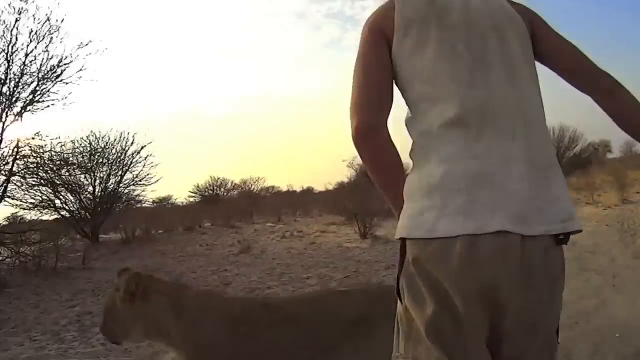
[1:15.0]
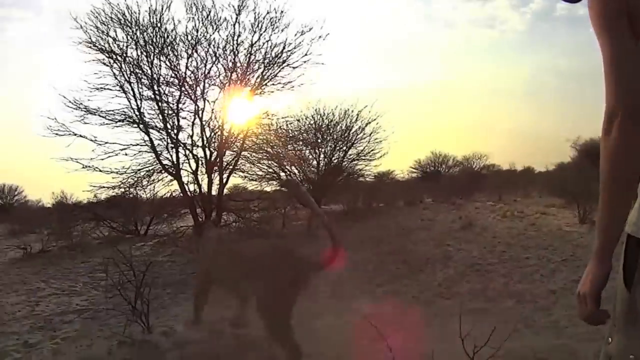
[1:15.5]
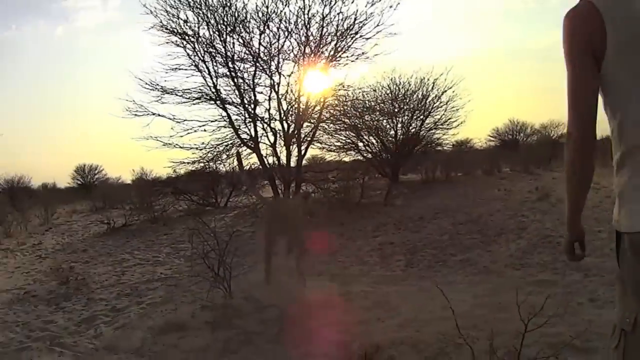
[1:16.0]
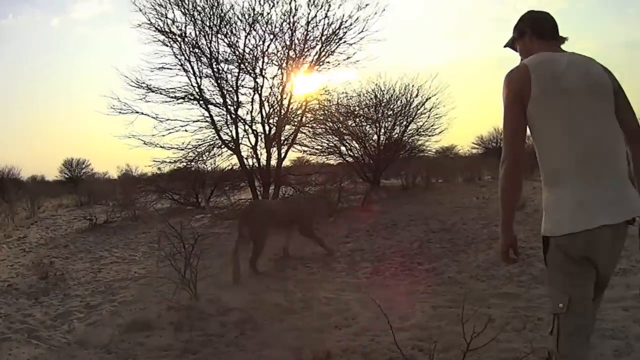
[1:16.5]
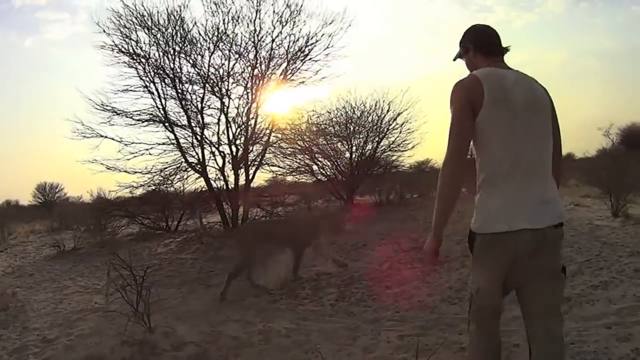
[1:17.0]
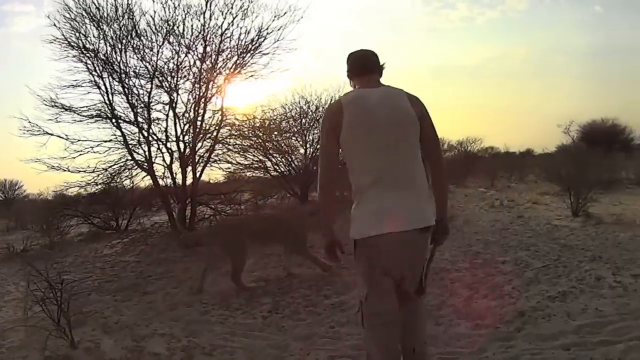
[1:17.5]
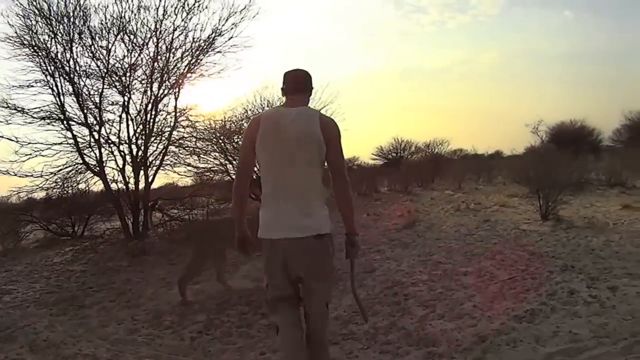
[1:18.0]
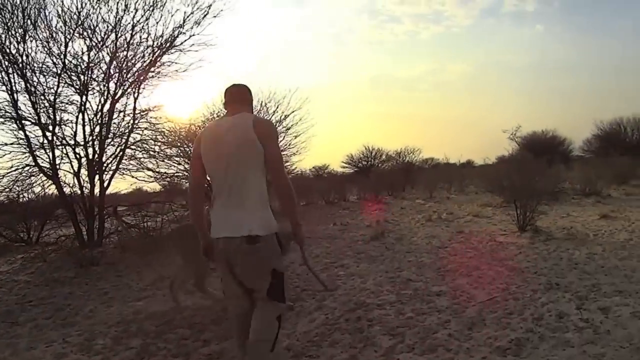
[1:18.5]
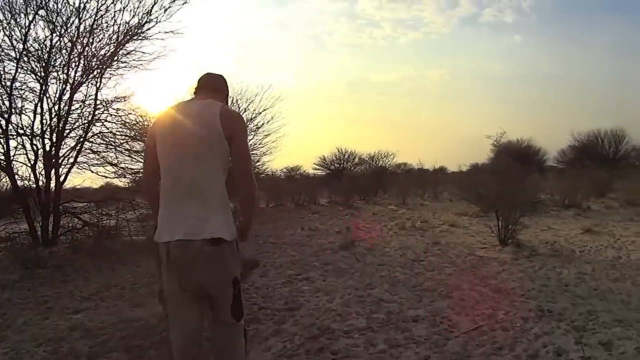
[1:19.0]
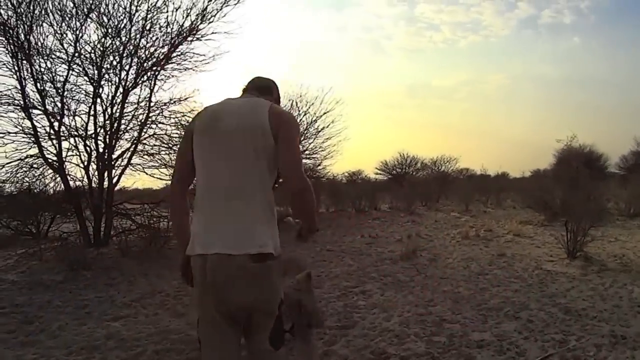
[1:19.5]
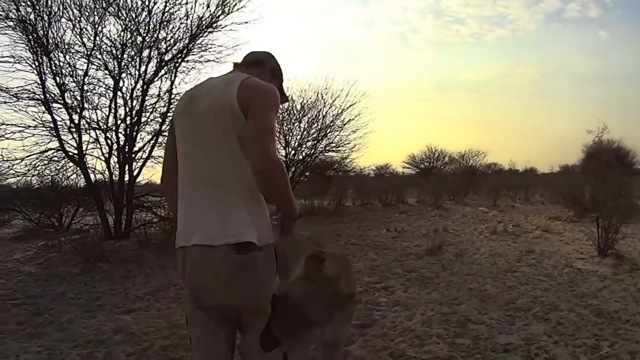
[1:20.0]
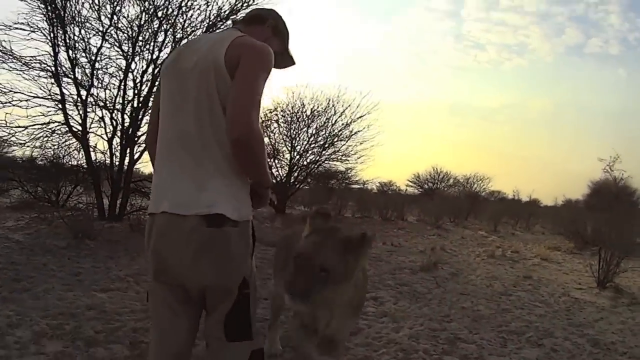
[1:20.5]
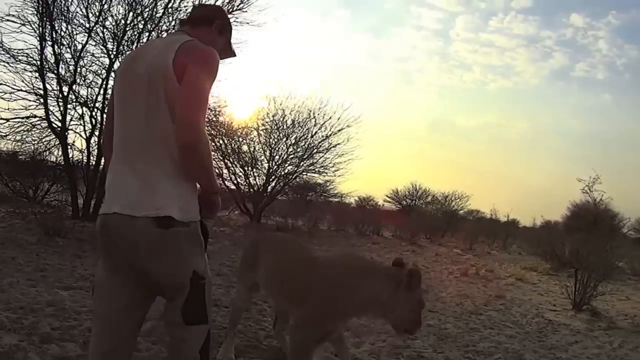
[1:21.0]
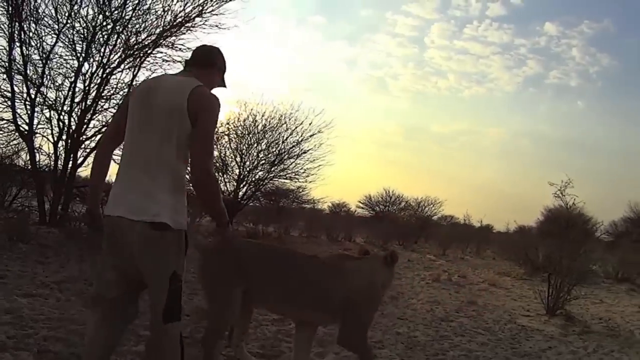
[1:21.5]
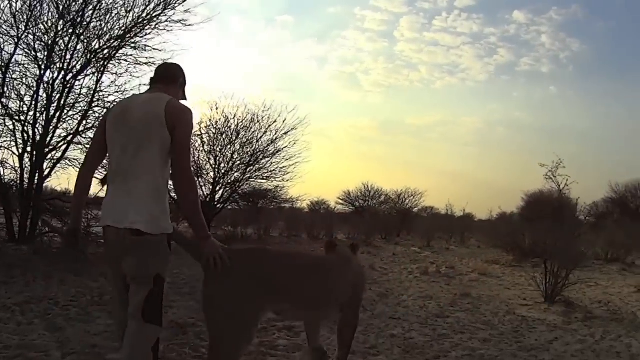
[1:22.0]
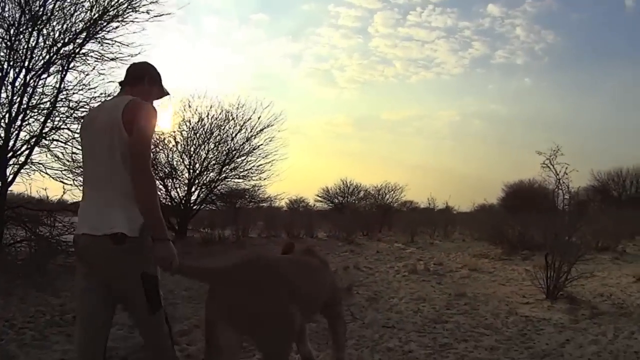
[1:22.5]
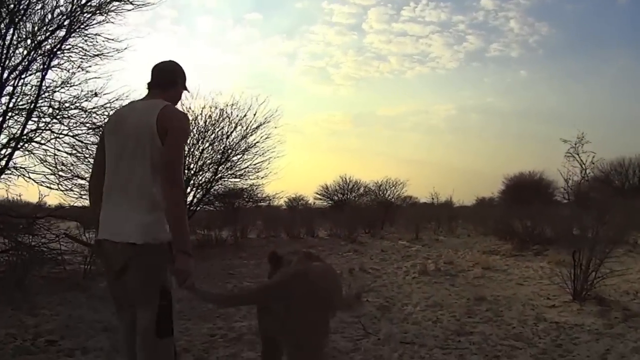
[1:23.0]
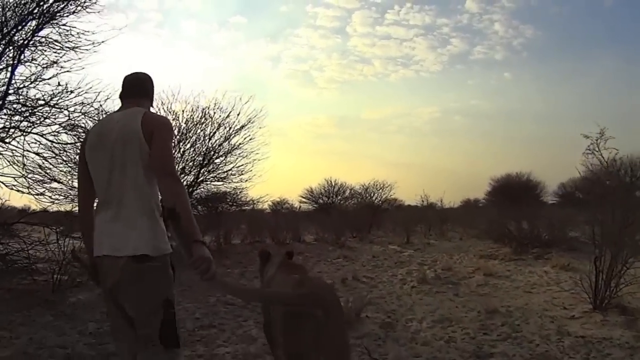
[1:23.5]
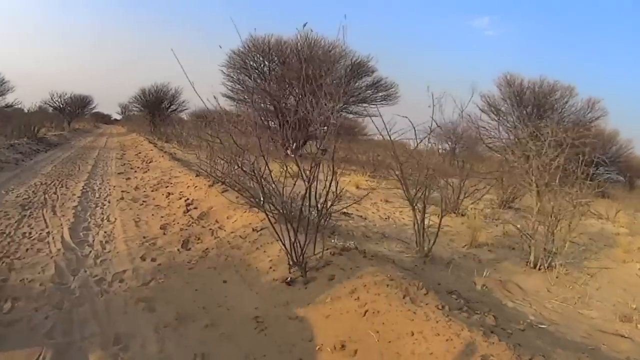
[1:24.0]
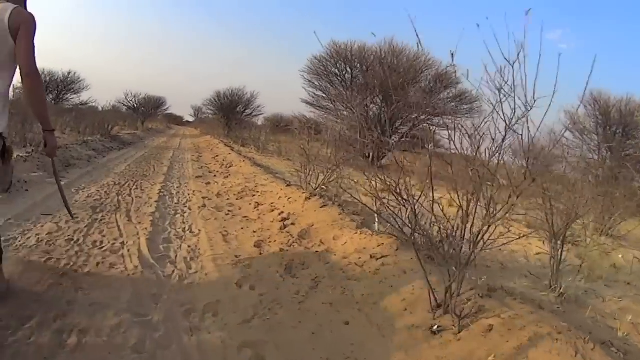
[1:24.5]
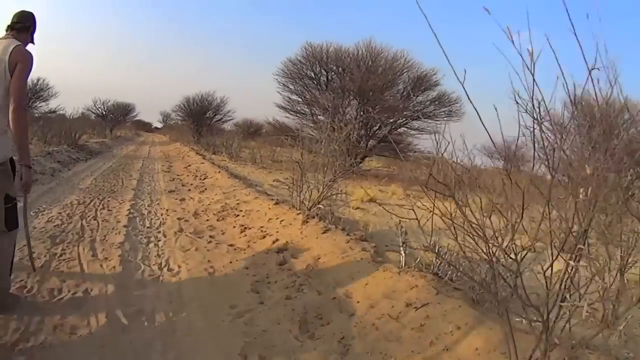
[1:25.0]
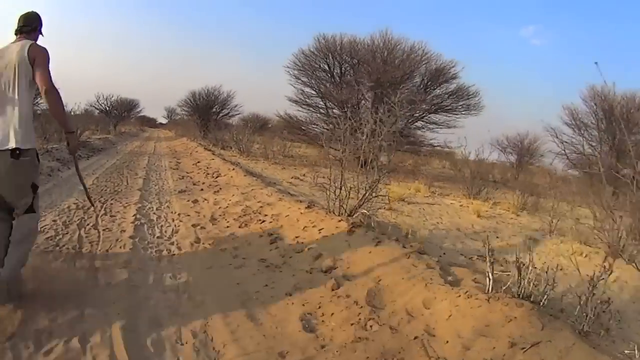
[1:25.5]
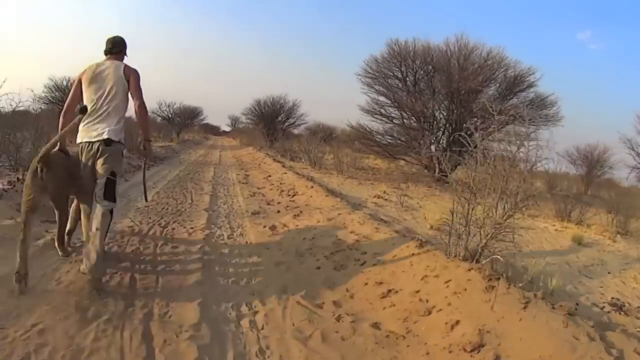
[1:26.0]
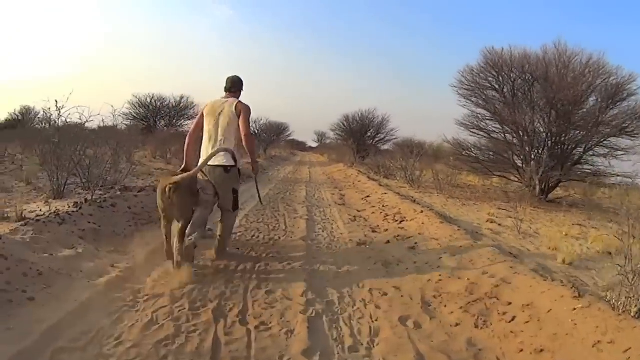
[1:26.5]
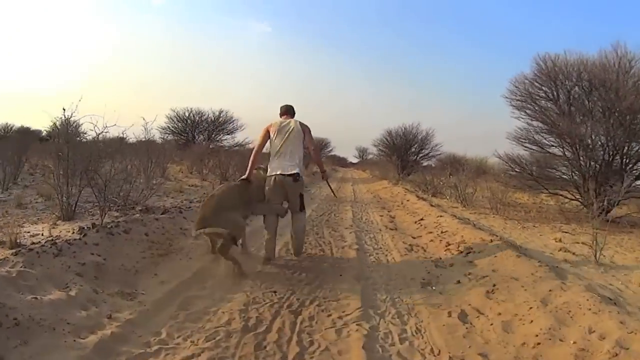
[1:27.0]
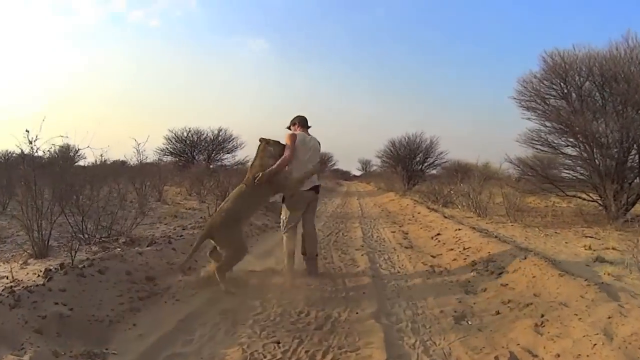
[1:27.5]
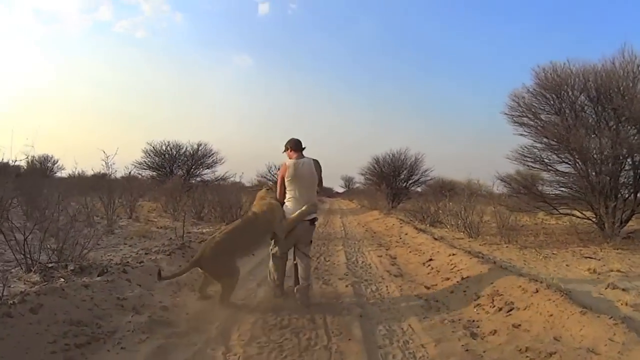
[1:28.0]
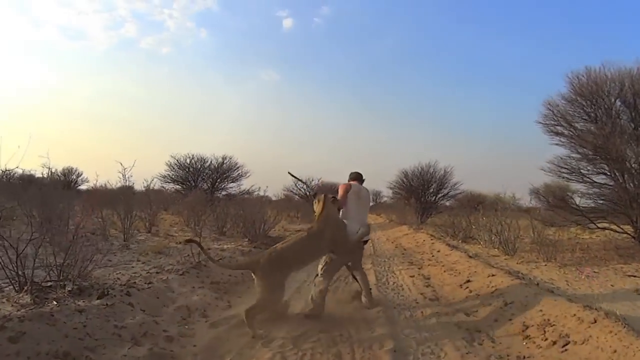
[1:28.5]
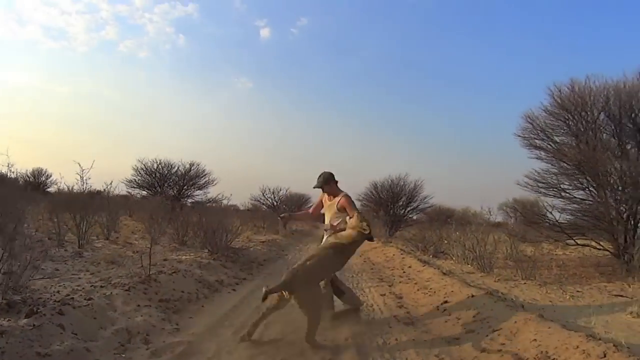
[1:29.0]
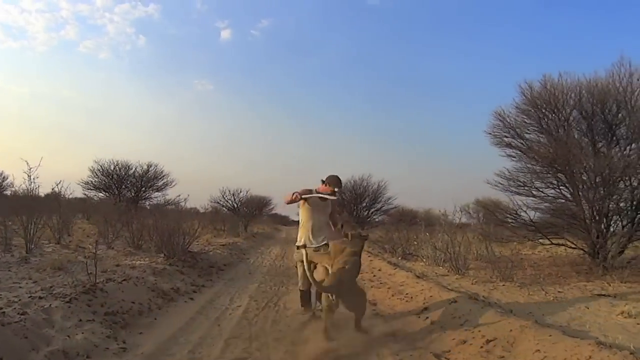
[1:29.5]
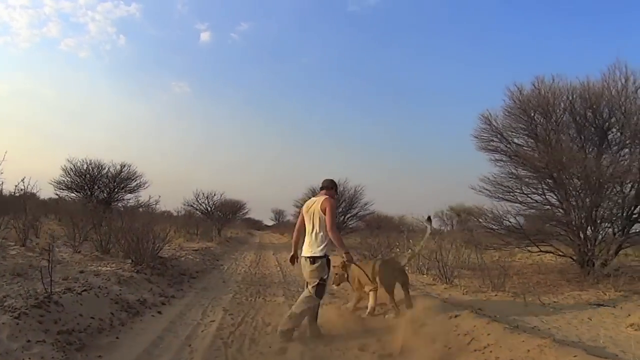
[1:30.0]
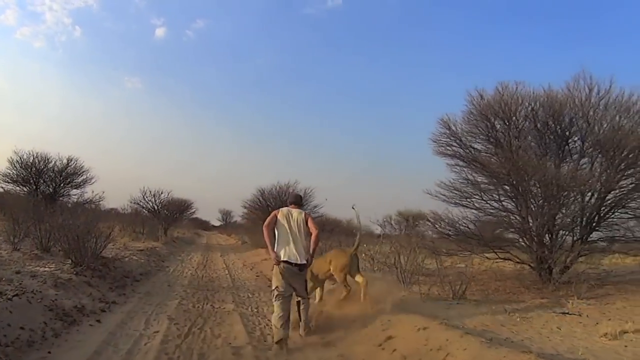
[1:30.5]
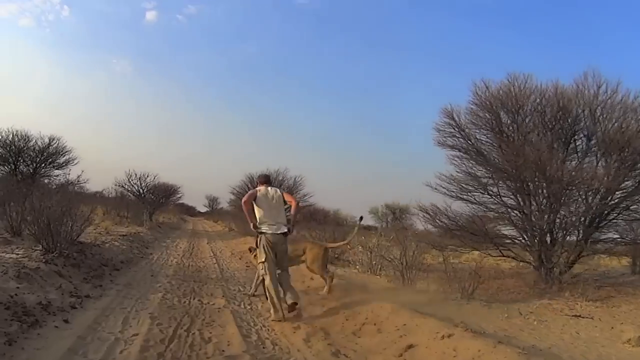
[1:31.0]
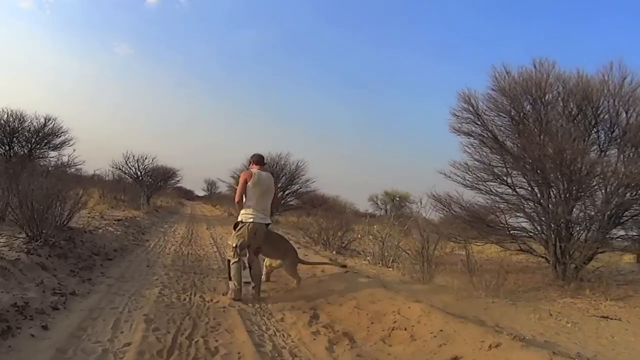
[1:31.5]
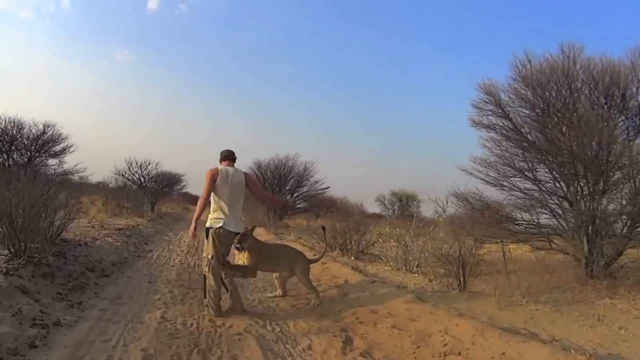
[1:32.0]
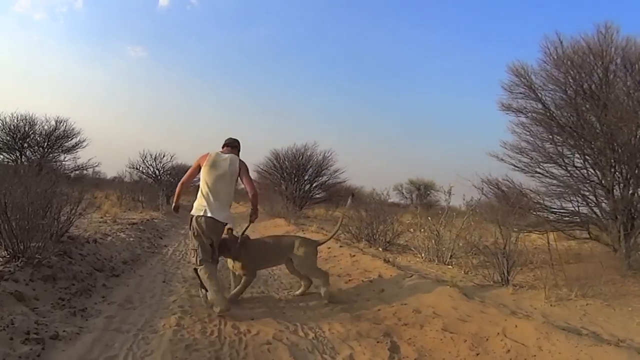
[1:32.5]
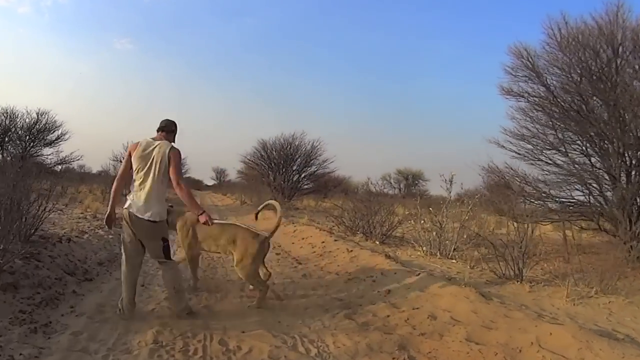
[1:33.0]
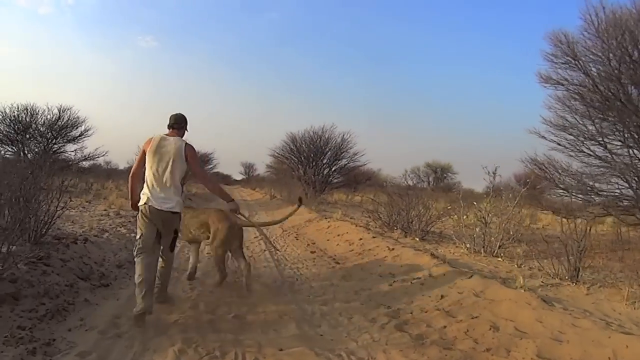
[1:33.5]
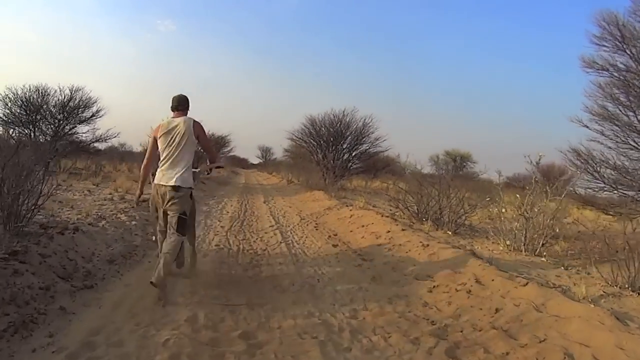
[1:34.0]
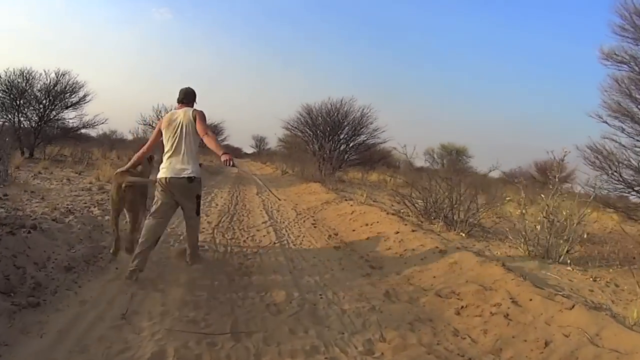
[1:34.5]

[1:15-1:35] It seems to have gotten a little darker, but the sun is still out. The man, wearing a white tank top and a baseball cap, continues down the sandy road with the lion. They play with one another, hugging and walking as it gets darker, and for some parts of the way they run and walk alongside each other, getting along well throughout the walk.